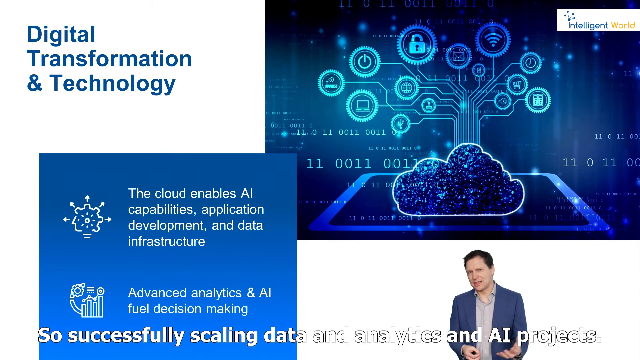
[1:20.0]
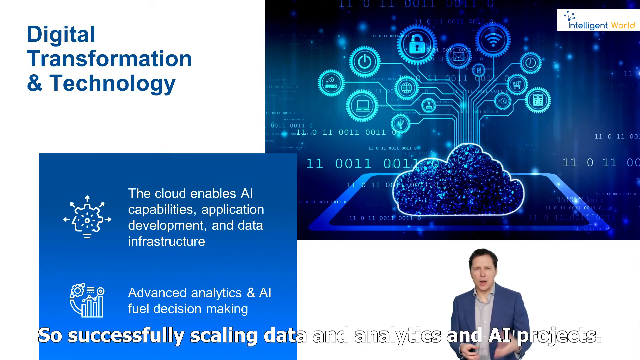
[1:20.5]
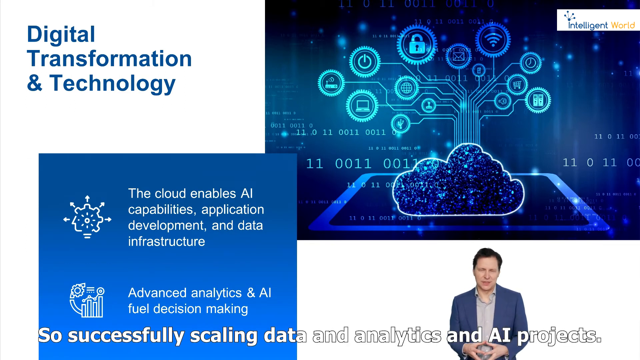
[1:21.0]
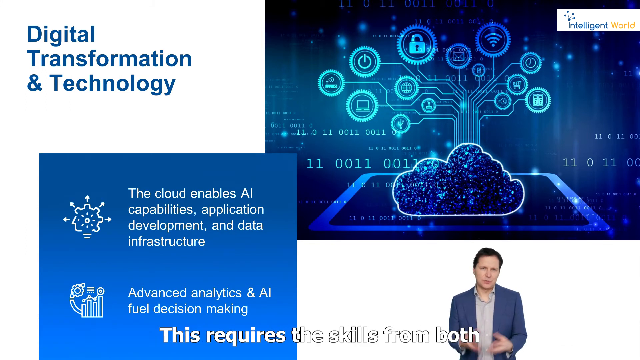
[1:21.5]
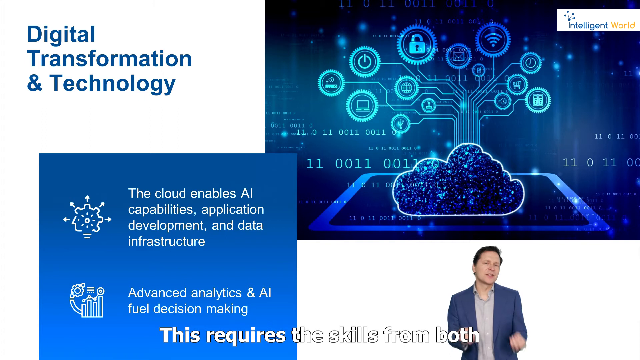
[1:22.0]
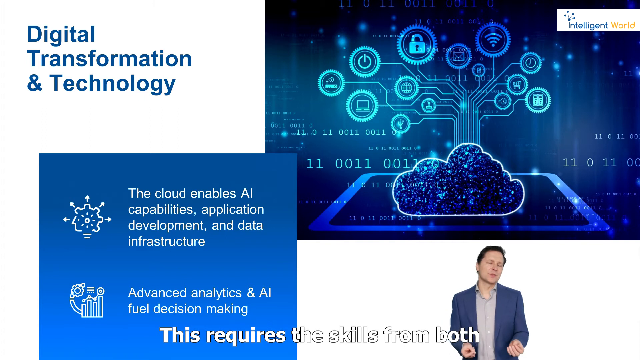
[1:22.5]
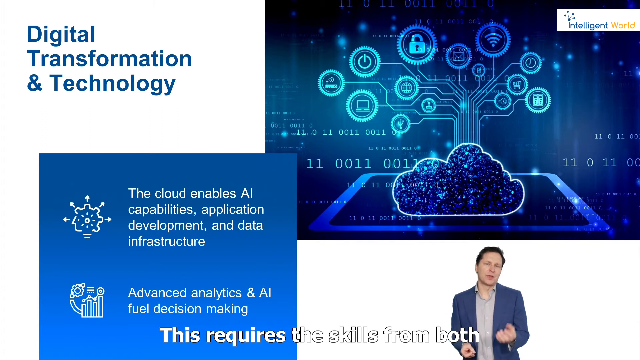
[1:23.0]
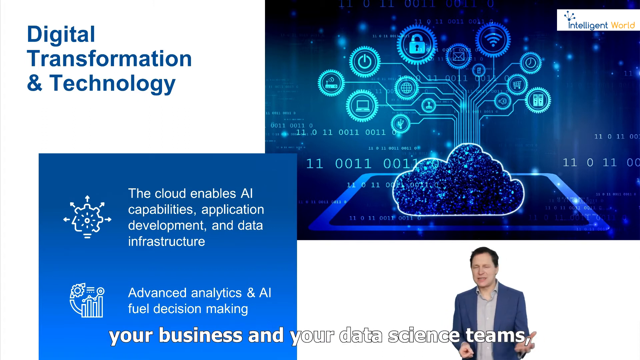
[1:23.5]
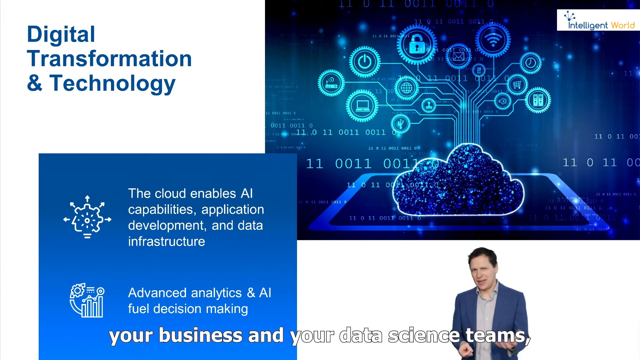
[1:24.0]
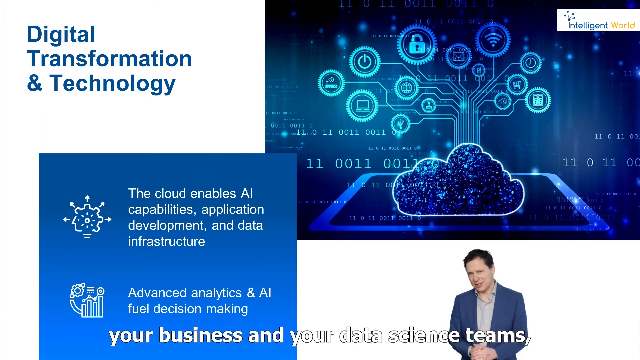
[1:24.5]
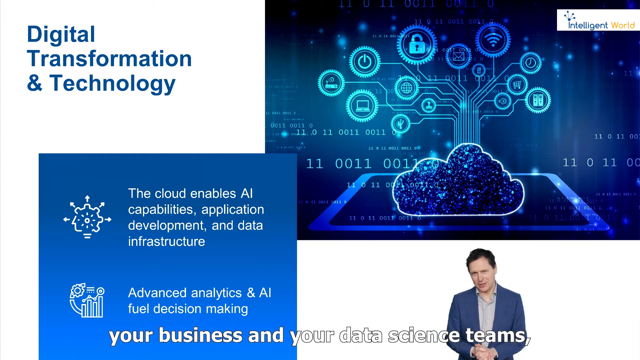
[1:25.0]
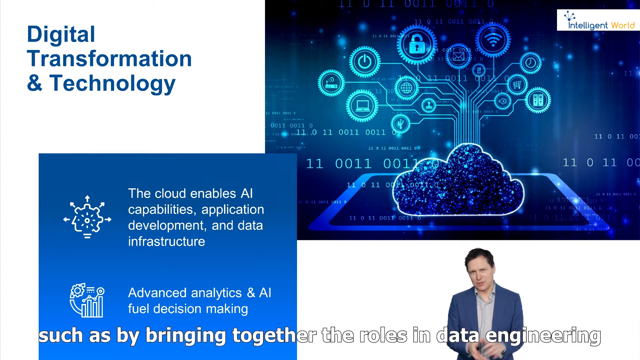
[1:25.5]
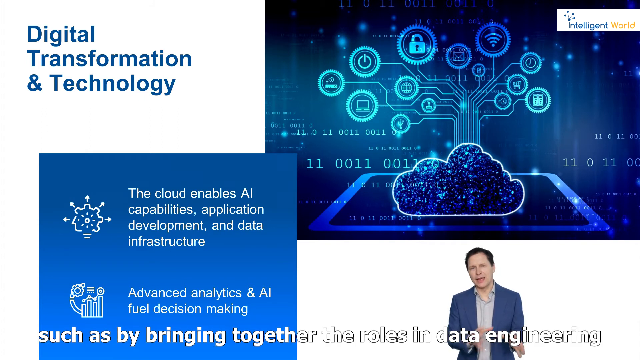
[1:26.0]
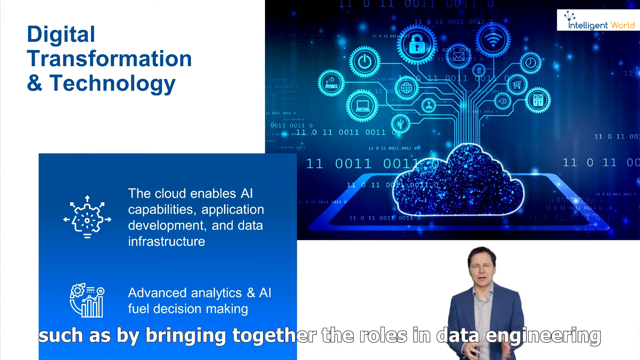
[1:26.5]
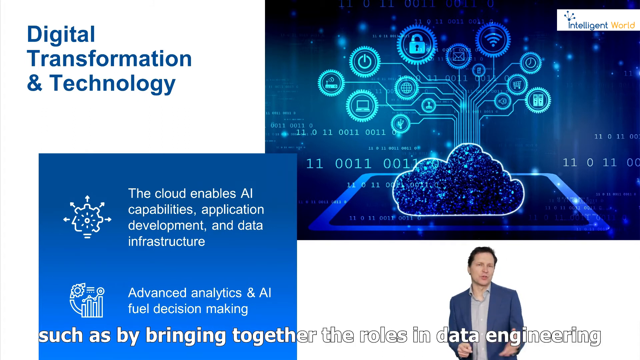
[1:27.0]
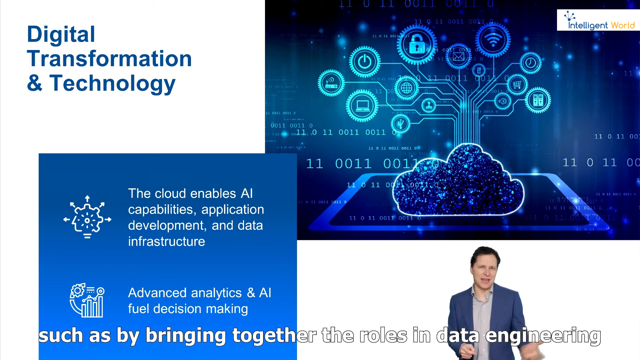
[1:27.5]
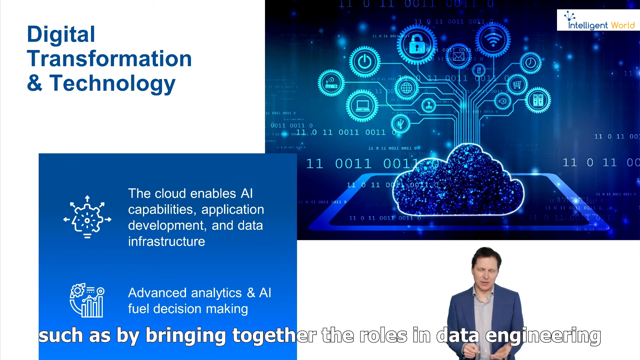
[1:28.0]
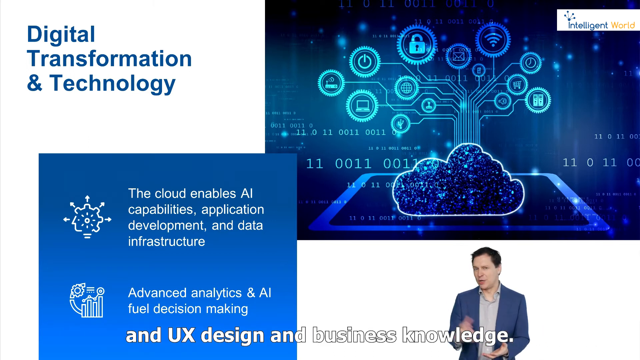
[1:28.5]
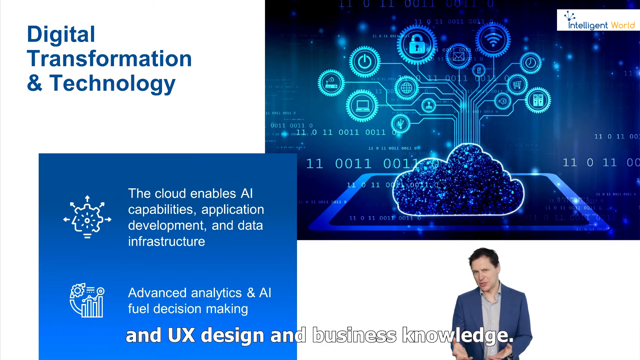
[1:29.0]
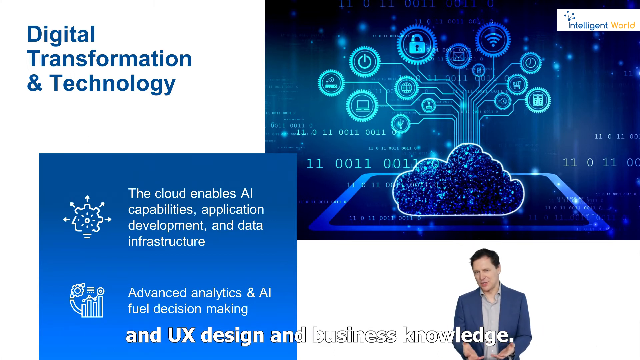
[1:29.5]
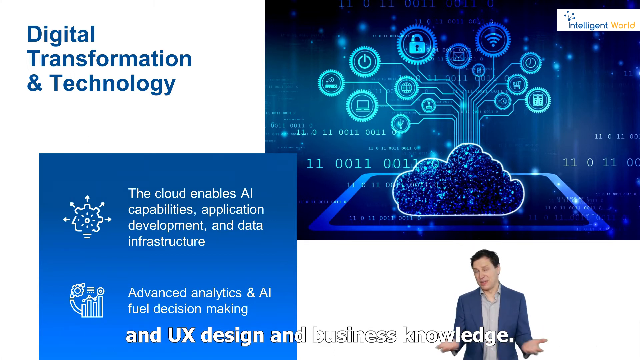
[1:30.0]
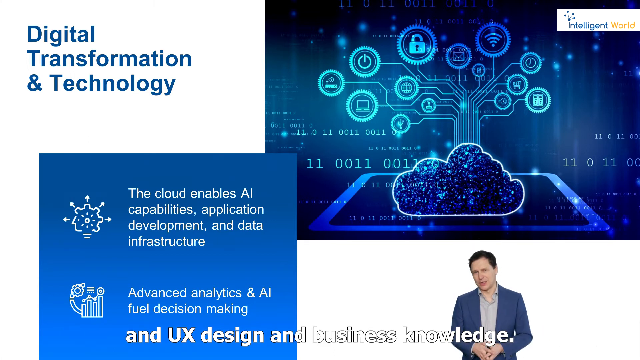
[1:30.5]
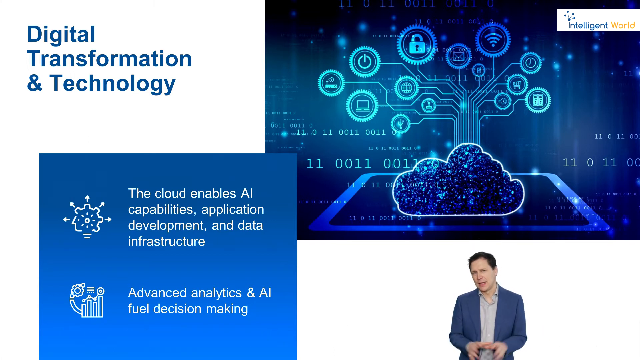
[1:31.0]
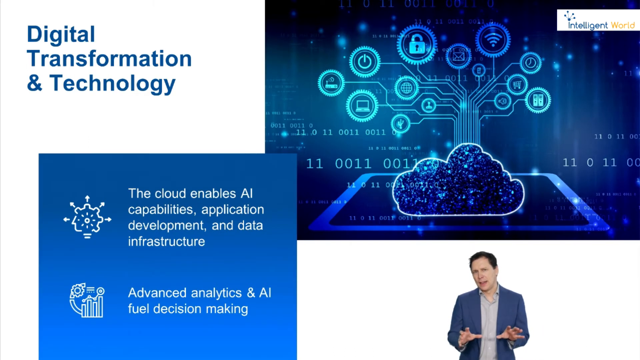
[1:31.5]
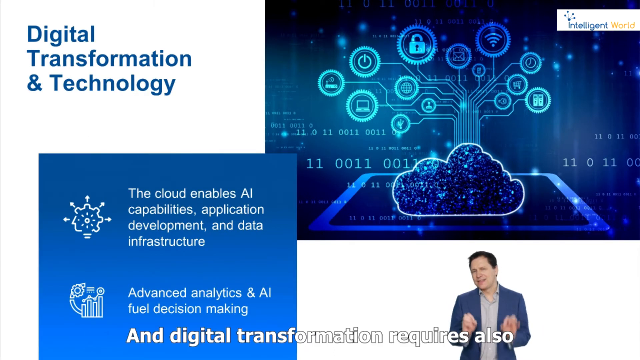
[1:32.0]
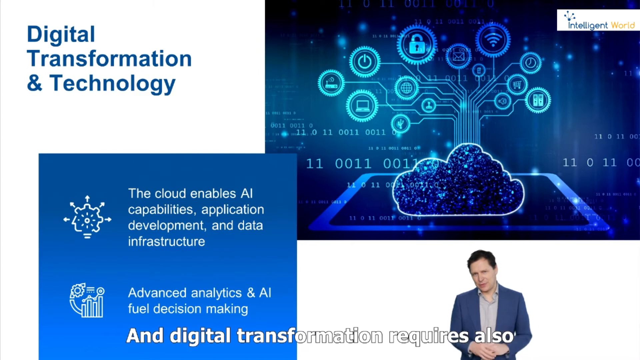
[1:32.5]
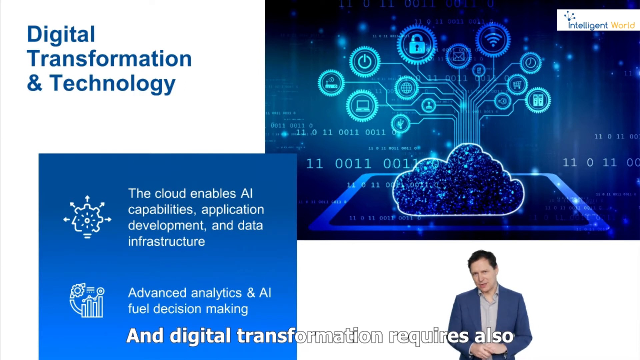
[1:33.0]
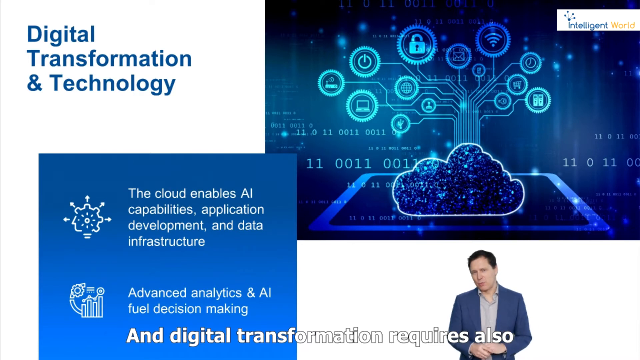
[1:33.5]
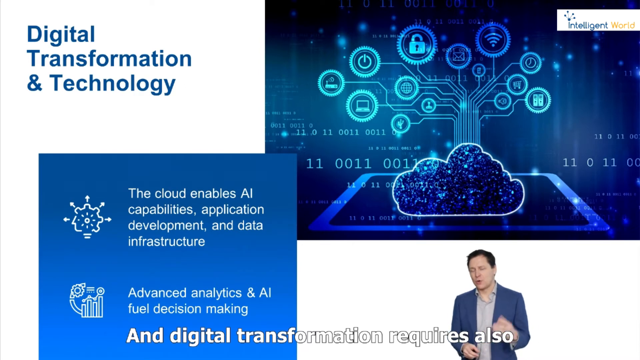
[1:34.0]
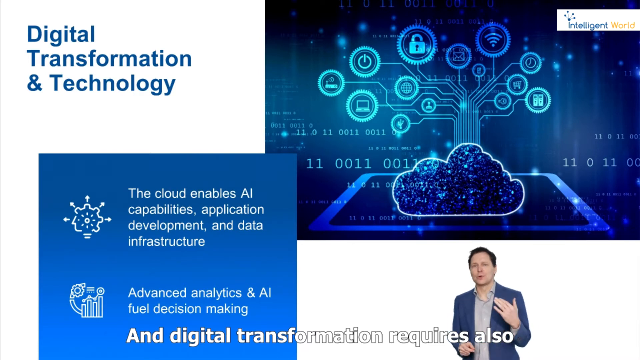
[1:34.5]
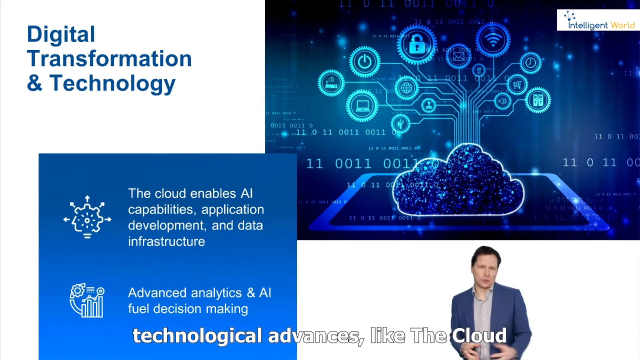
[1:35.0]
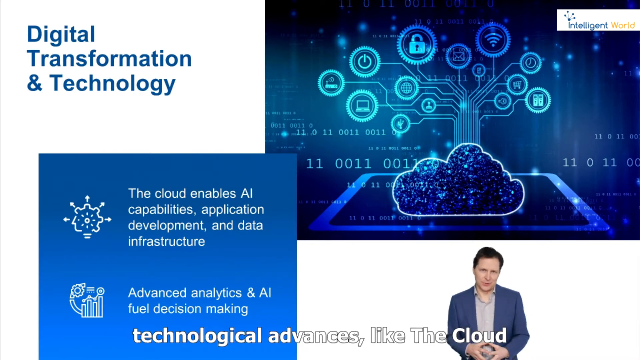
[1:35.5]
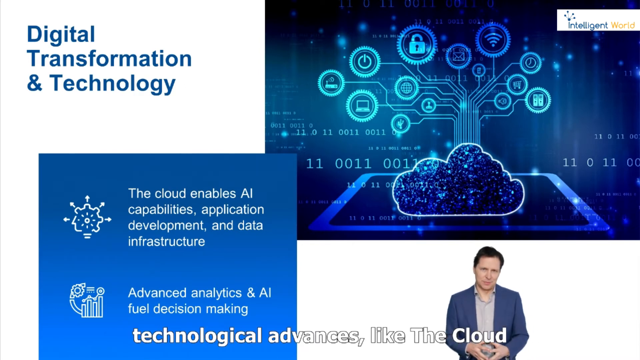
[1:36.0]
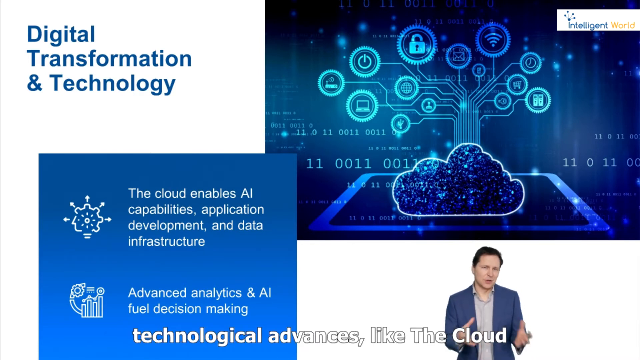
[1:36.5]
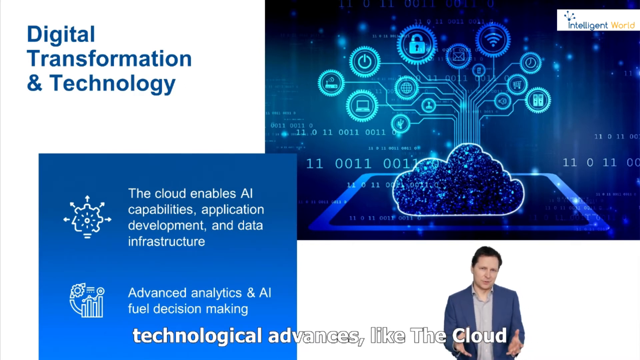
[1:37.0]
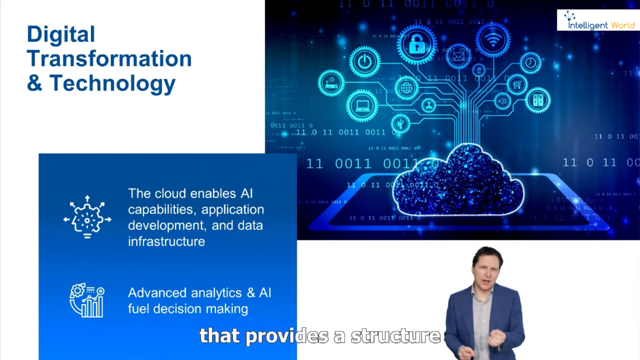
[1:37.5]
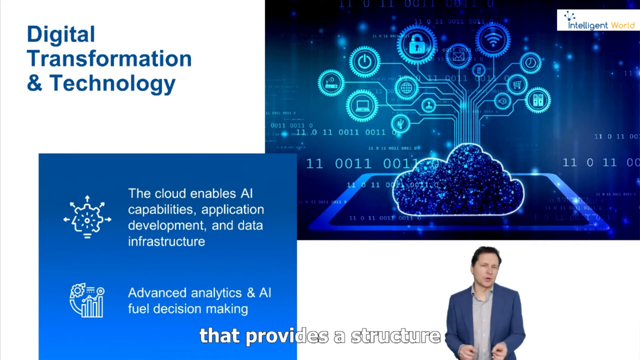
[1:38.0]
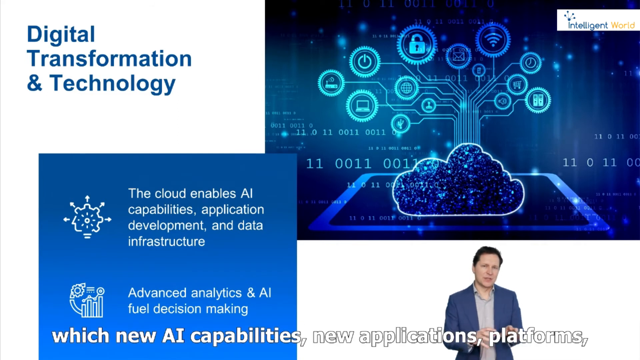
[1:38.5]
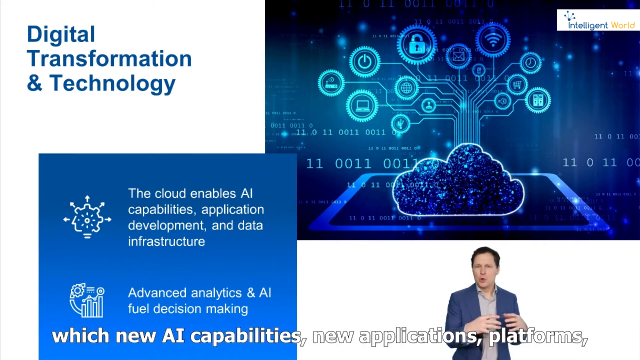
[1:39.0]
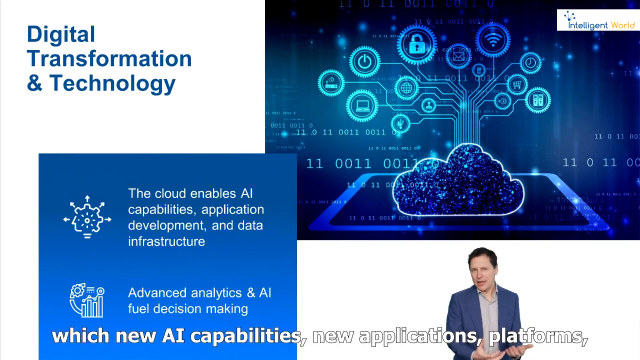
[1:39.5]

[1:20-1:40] The man giving the presentation is minimized, almost in the lower right corner. The large graphic from the slide "digital transformation and technology" is up, with a cog-like icon, a machine-like icon and information. Captions go by pretty quickly as he speaks, including "provides a structure which new AI capabilities." He looks like he is explaining, gesturing, with his head moving to the sides a bit as he enunciates. Right above him is a large graphic of a cloud, all blue and kind of crystal-like, with what seems to be circuitry coming out of it. Small icons, each different, are attached to the ends of the circuits: one looks like a lock, another like an on-off button, another like a computer, and there are others.